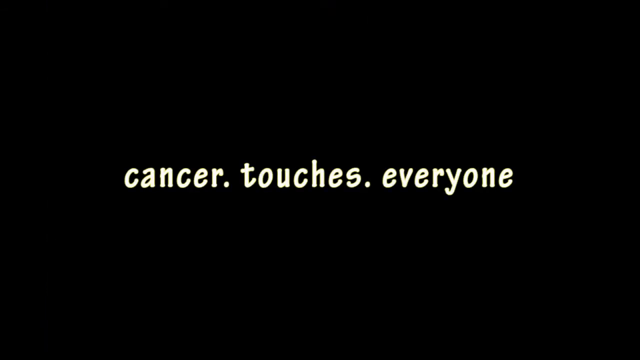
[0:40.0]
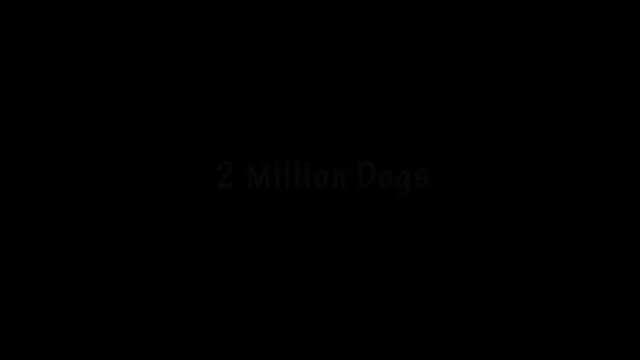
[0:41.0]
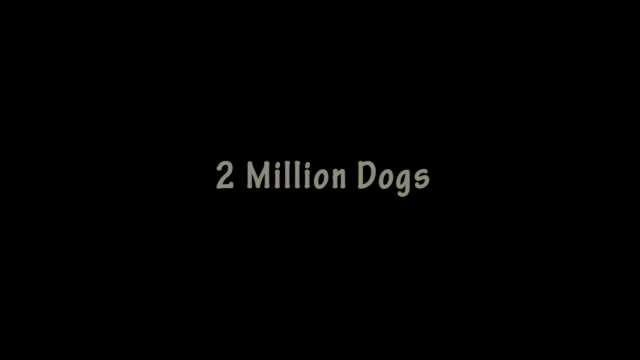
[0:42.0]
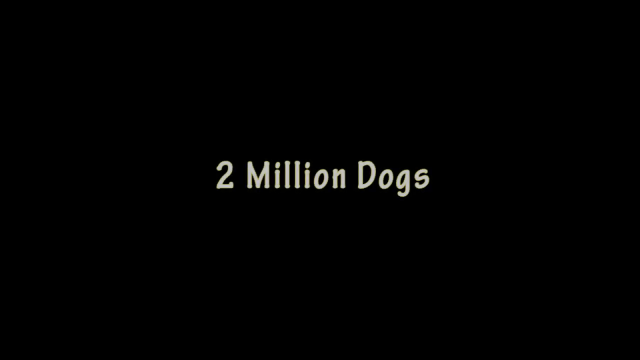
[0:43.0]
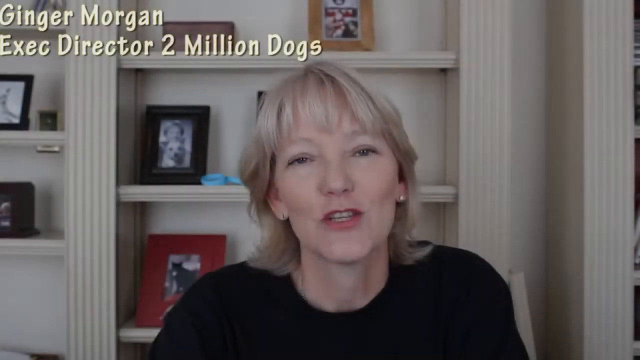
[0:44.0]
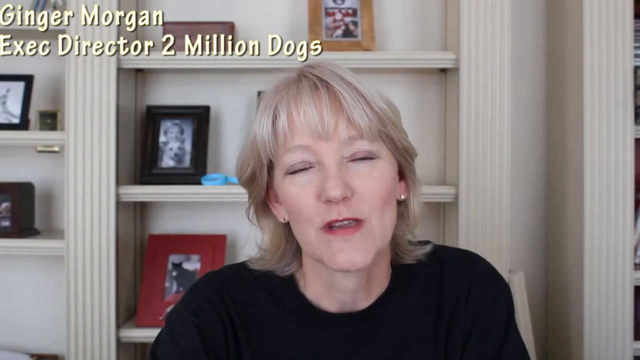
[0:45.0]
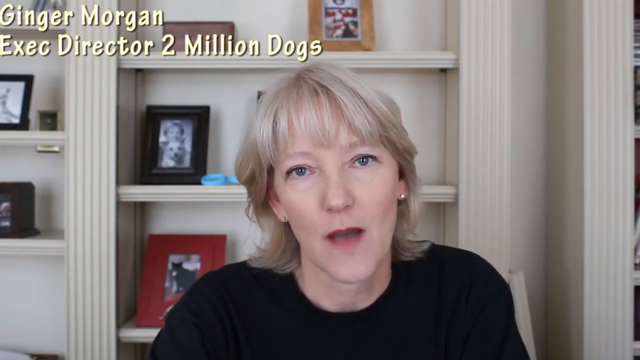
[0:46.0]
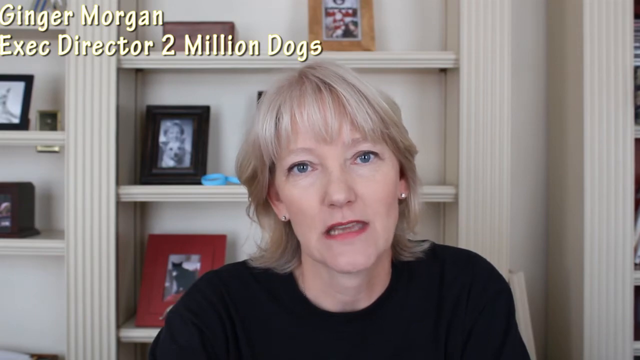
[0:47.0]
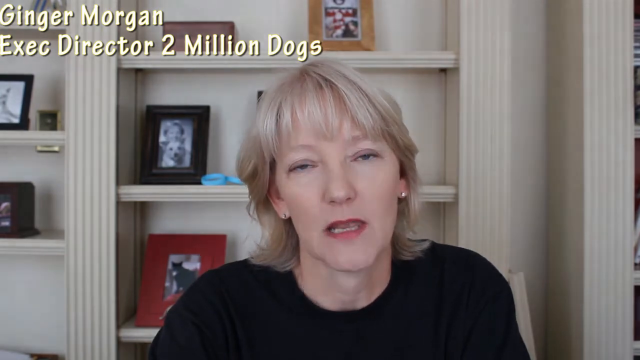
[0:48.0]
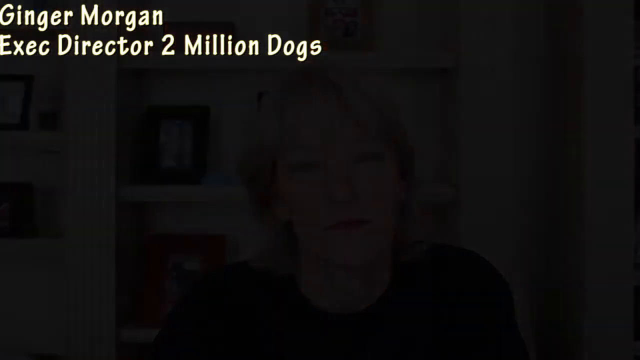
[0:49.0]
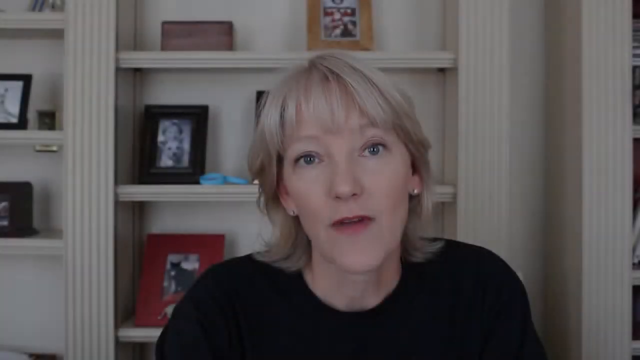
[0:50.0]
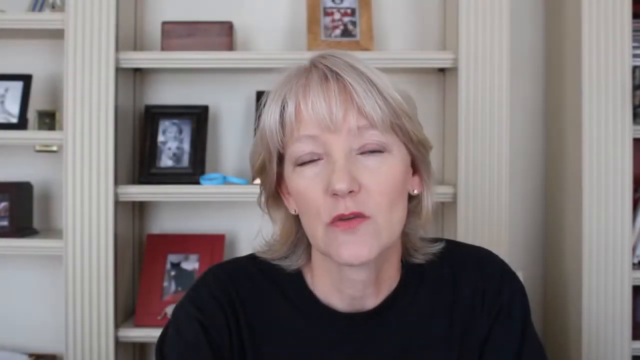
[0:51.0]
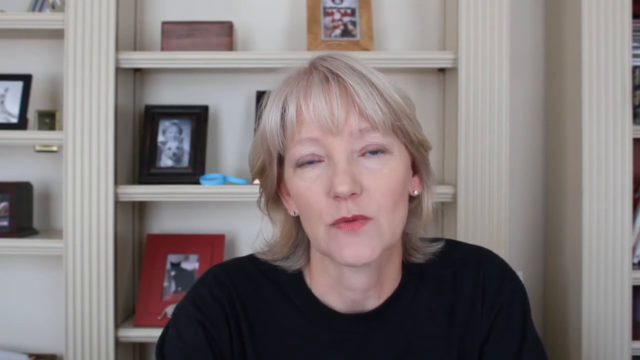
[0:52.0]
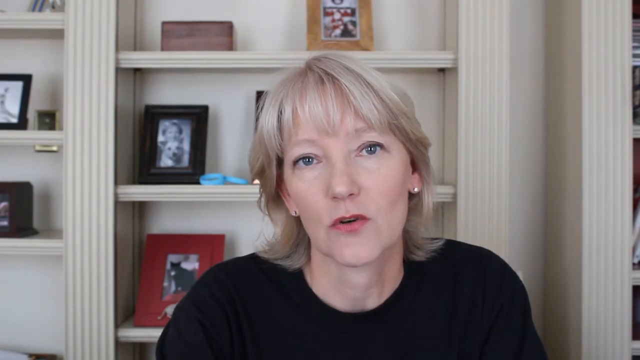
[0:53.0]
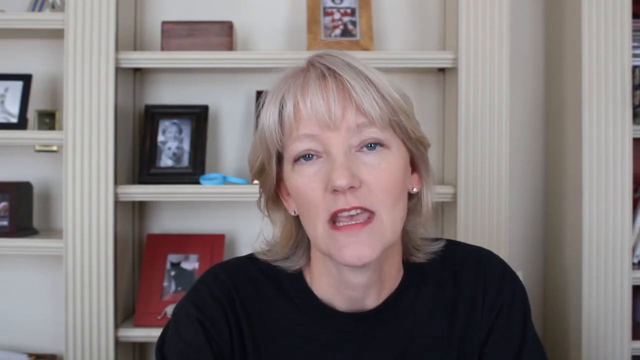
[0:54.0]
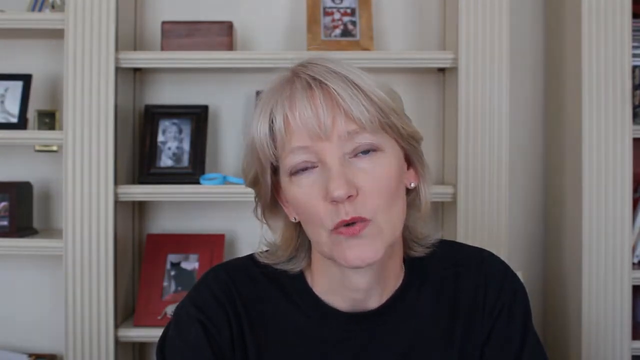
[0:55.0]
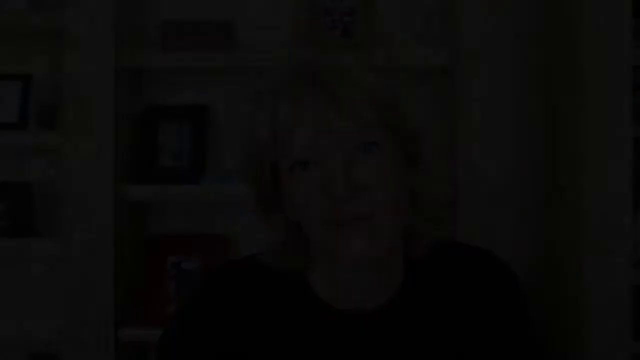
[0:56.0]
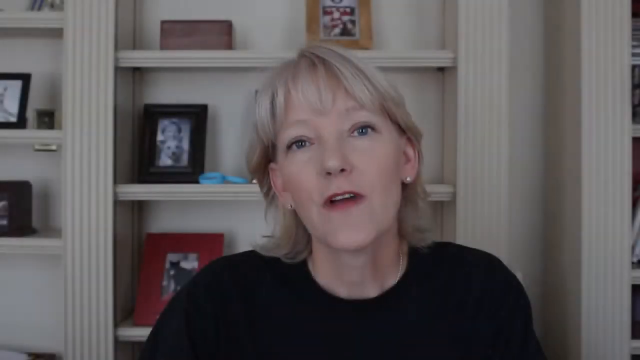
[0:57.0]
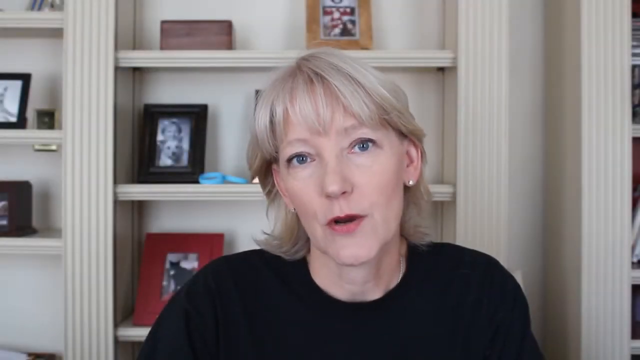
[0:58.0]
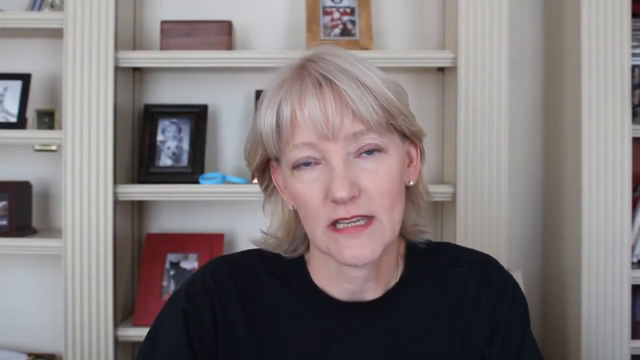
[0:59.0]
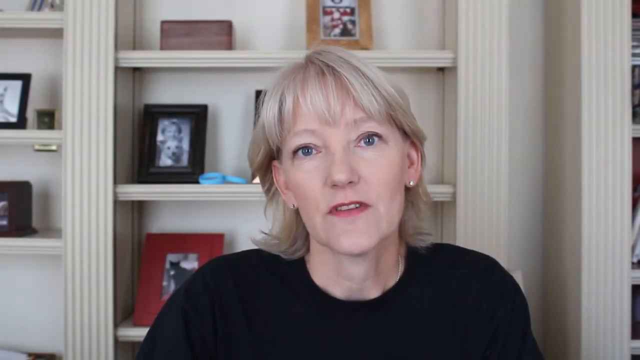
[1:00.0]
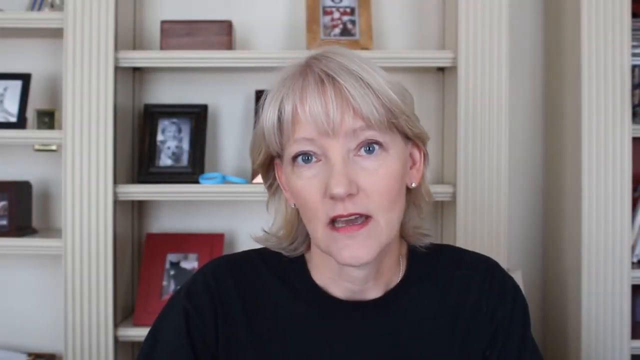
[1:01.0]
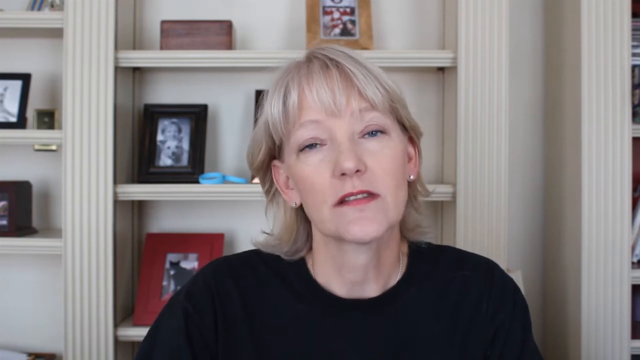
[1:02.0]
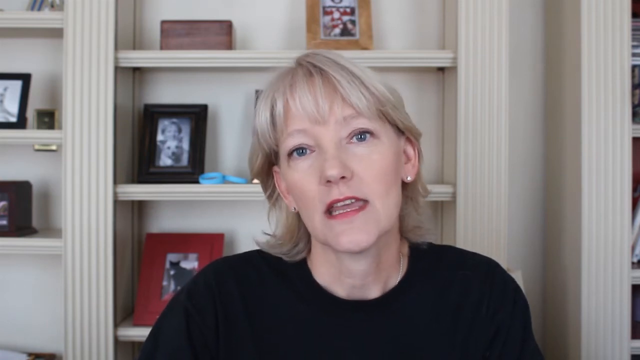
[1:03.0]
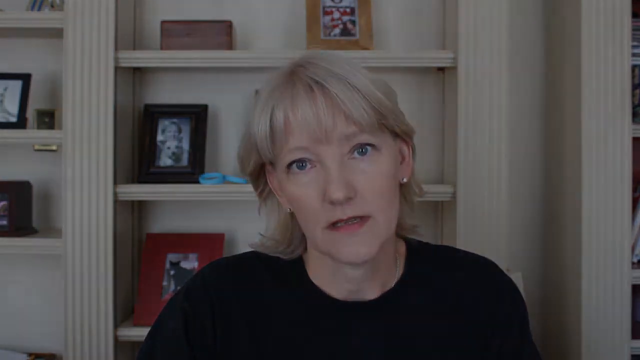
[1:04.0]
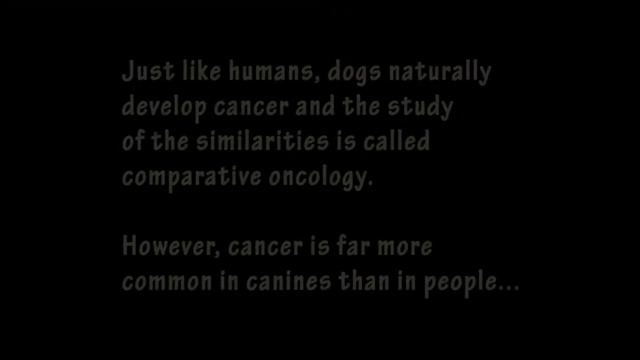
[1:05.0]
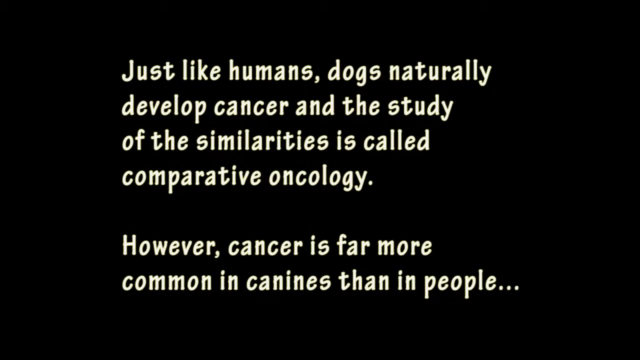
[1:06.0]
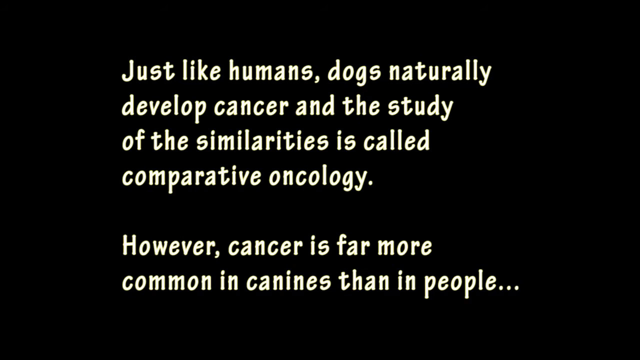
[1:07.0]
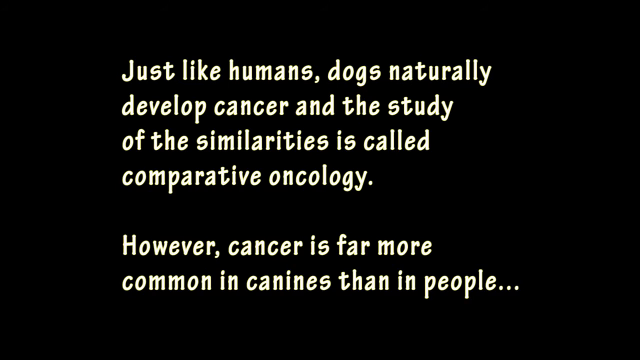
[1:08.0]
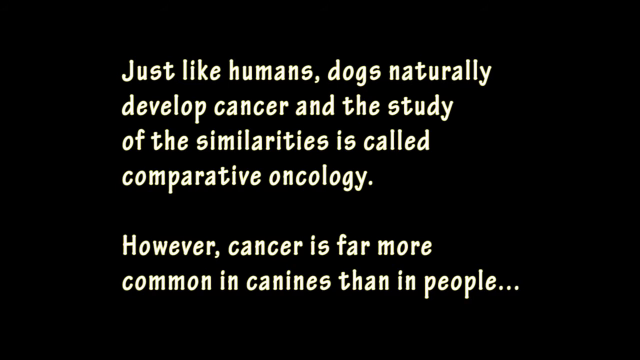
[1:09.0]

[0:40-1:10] Text reads "cancer touches everyone". The executive director of two million dogs, Jean Jamorgan, has blondish hair and wears earrings and a black jacket; in the background are photos of her with dogs. The video states: "just like humans dogs naturally develop cancer" and that the study of the similarities is called comparative oncology, "however cancer is far more common in canines than in people." It then shows "cancer touches everyone" and "two million dogs".